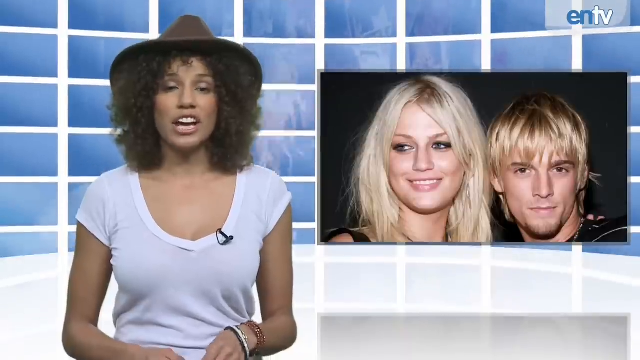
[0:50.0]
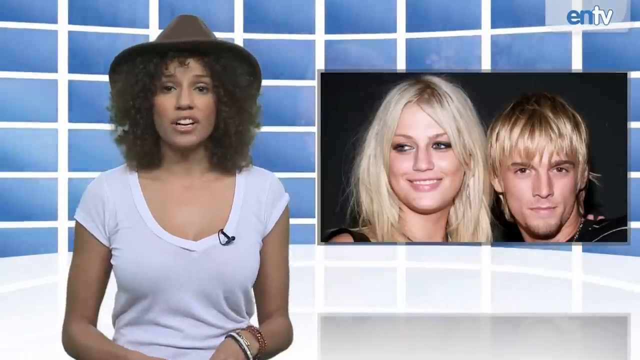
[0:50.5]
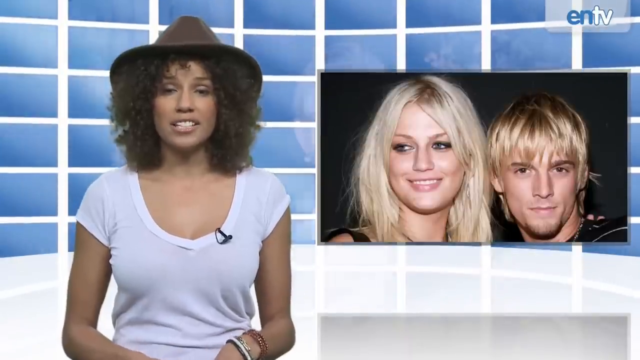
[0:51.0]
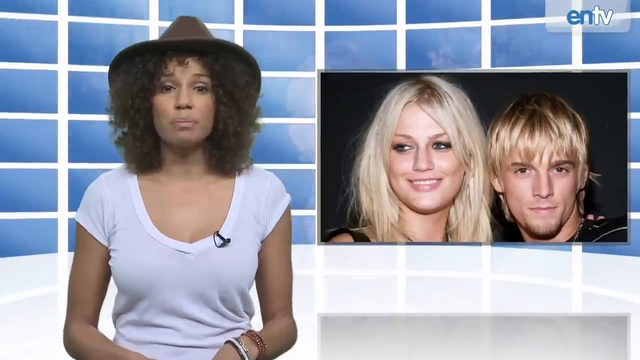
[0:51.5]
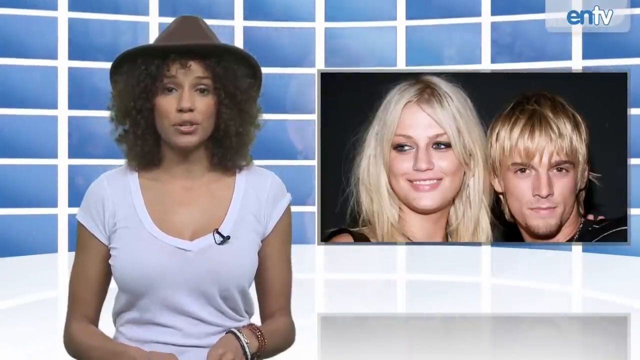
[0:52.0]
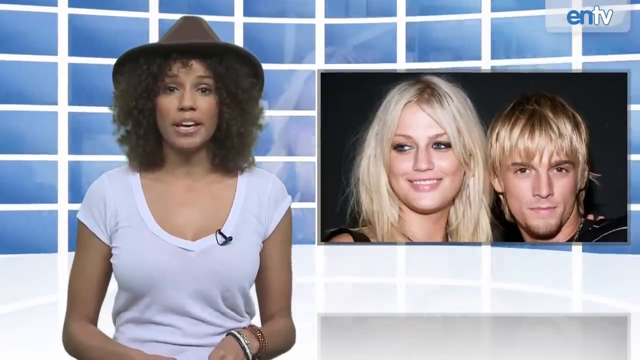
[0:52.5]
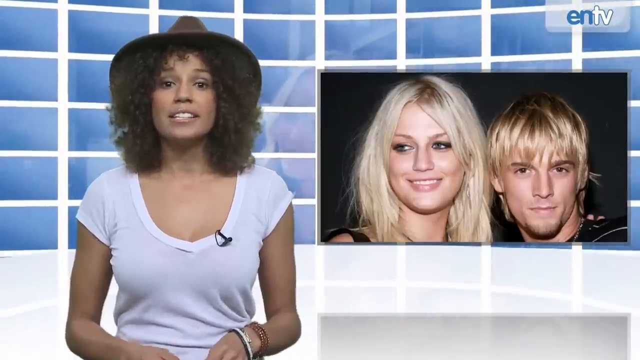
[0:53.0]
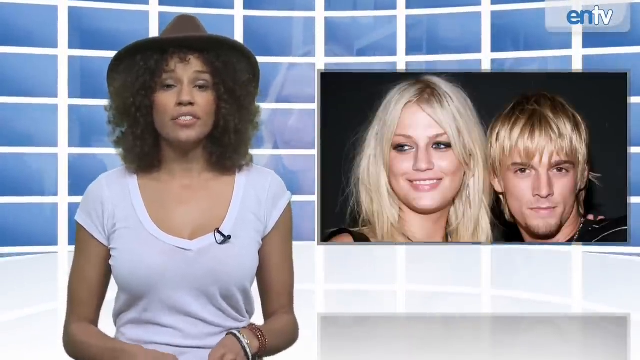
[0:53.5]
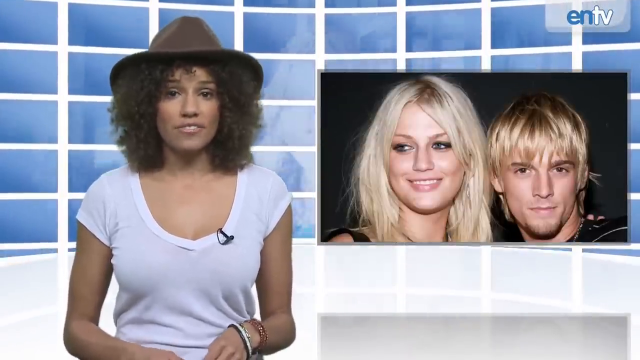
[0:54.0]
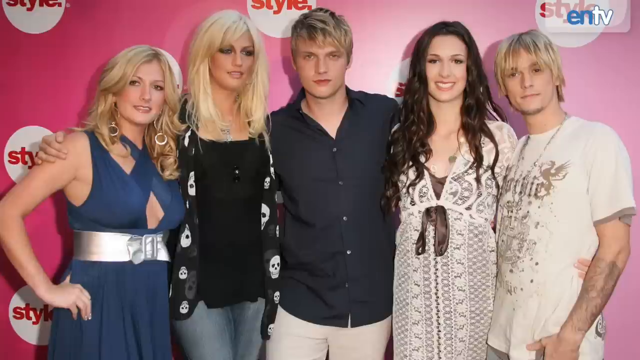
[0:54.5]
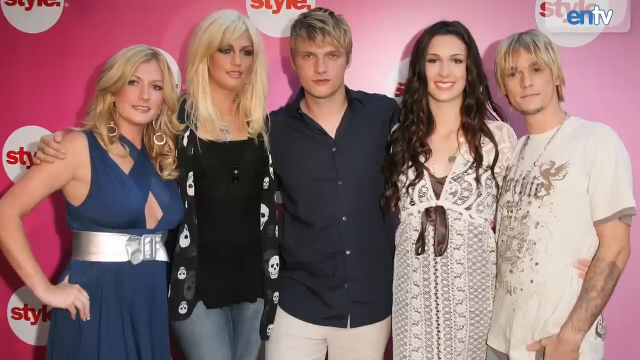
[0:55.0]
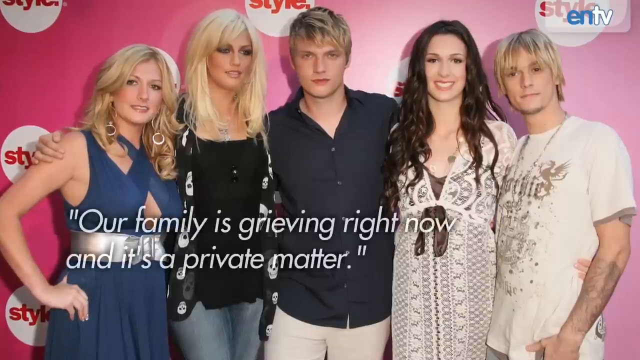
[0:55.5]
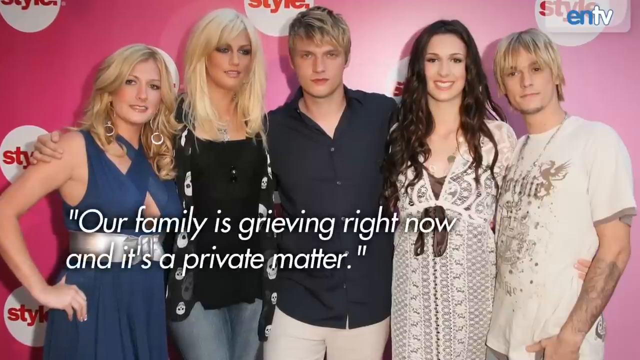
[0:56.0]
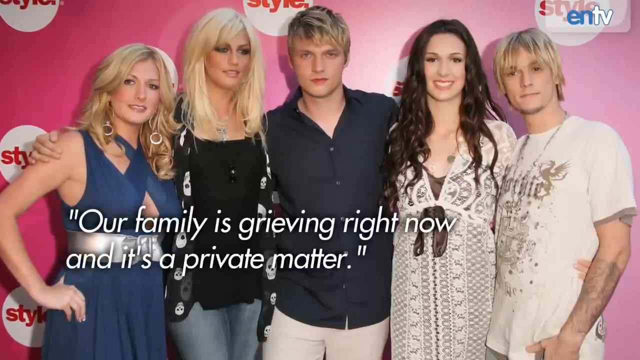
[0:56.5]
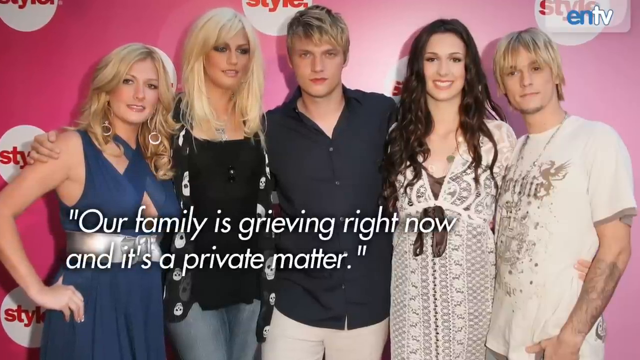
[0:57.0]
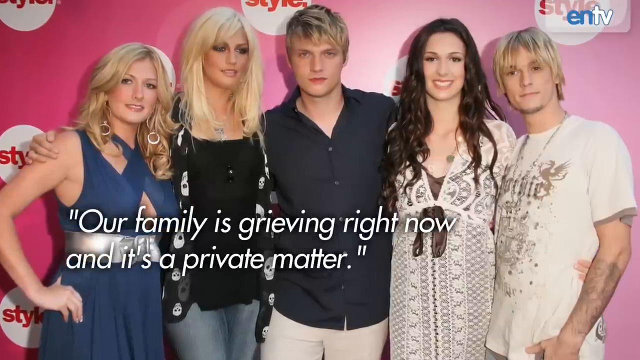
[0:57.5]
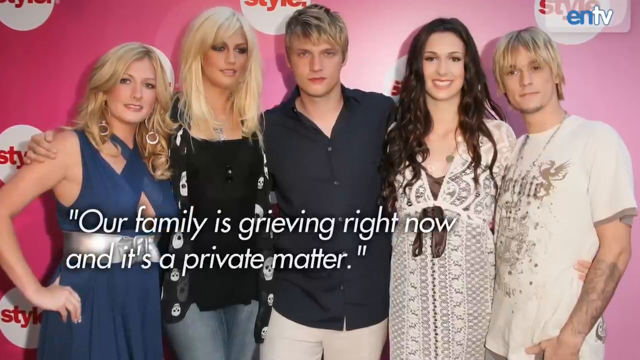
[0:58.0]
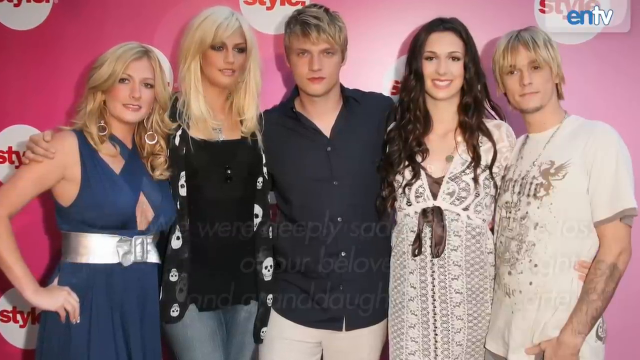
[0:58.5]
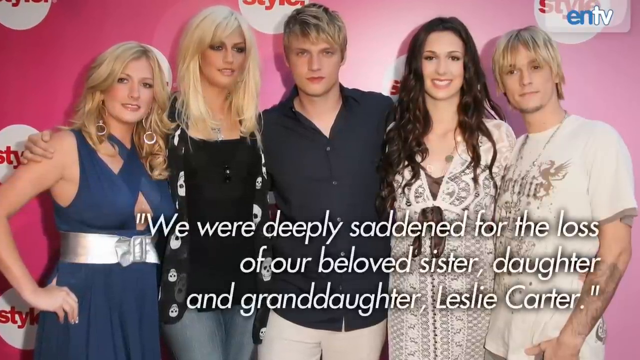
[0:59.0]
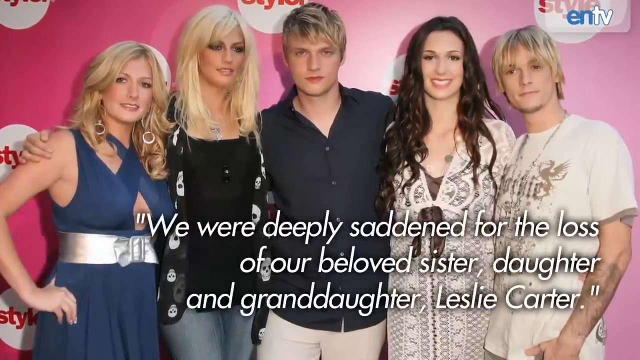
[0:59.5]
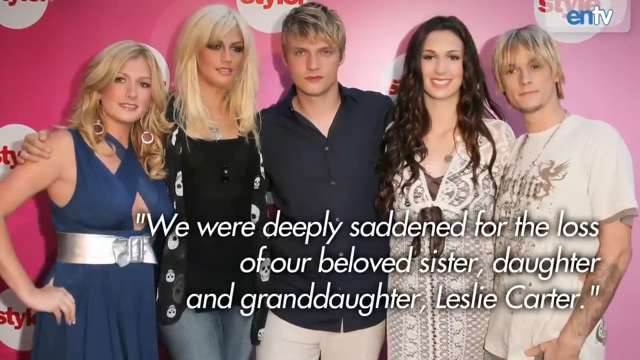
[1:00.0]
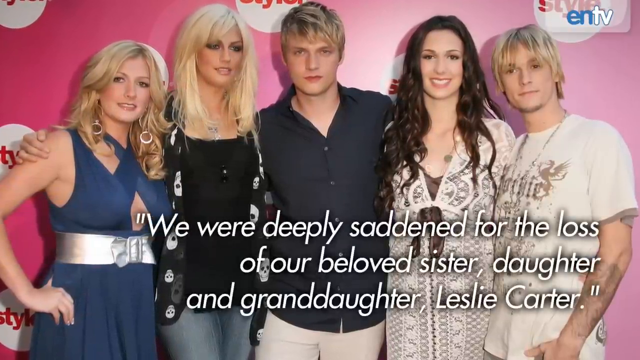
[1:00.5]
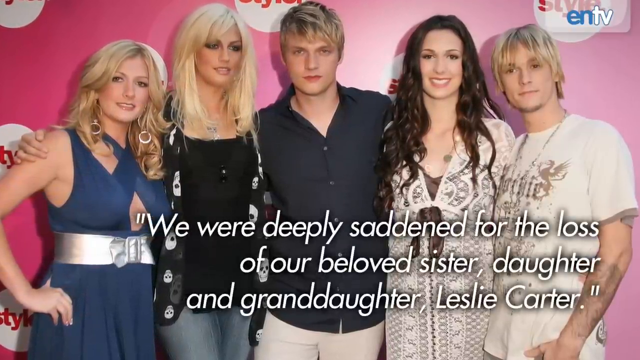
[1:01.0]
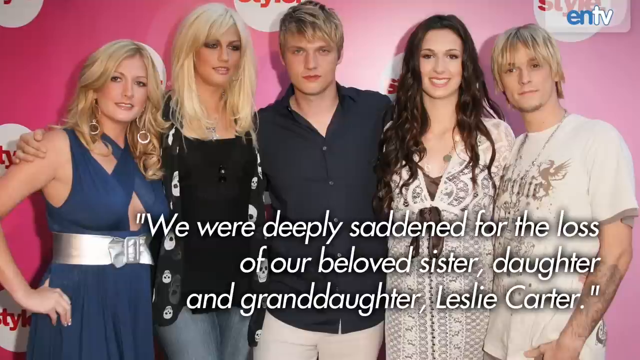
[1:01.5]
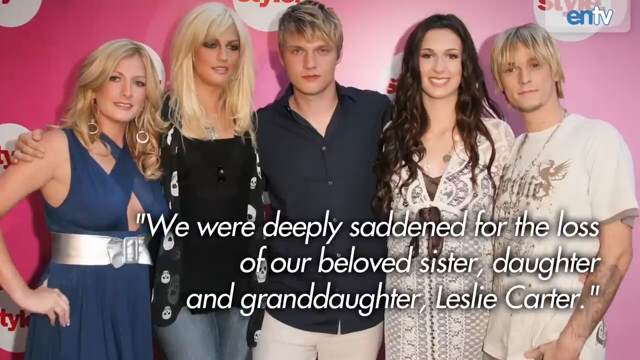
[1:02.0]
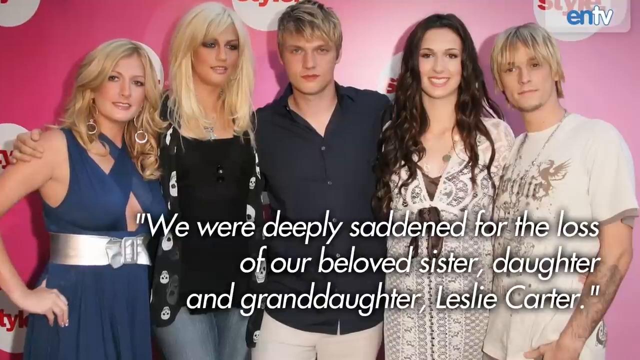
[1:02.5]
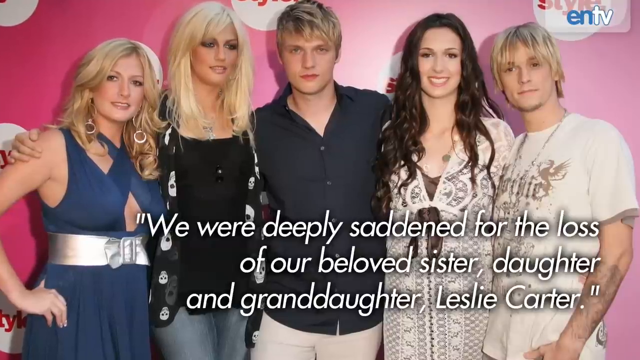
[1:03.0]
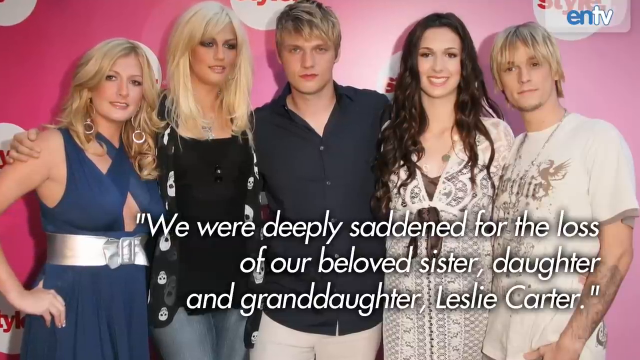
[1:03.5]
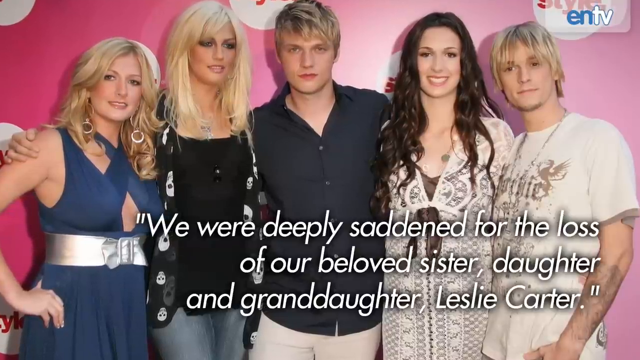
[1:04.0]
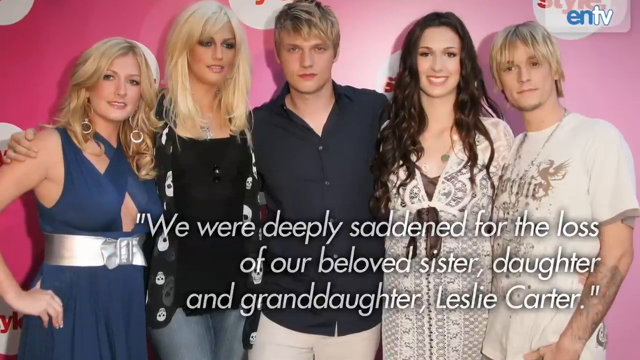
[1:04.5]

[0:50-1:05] The newscaster continues speaking to camera. The video cuts to a red carpet photo of a family of five white people. A quote appears on screen reading "our family is grieving right now and it's a private matter", and continues: "we were deeply saddened for the loss of our beloved sister, daughter and granddaughter, Leslie Carter".